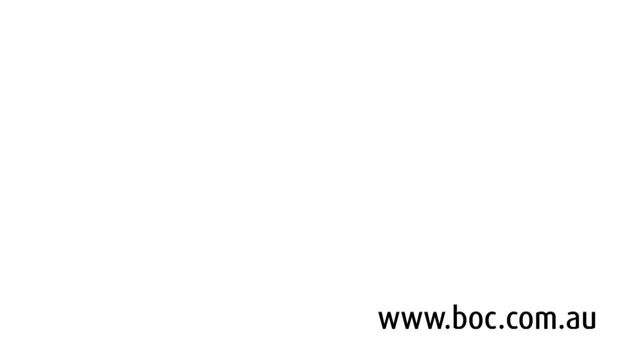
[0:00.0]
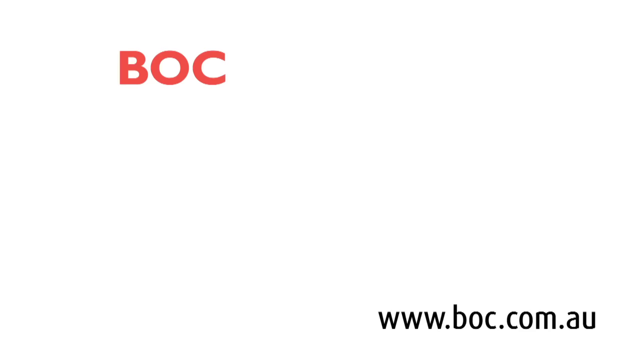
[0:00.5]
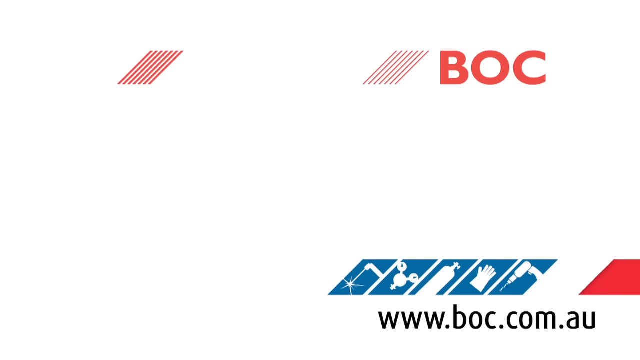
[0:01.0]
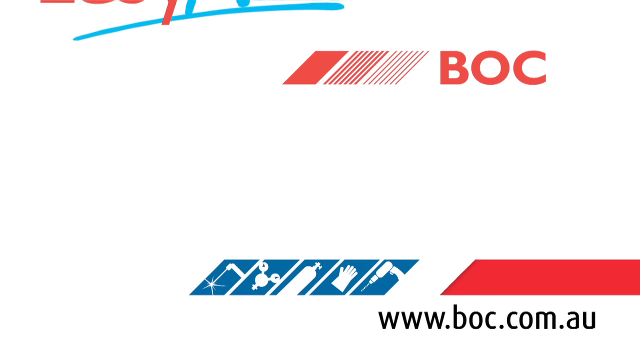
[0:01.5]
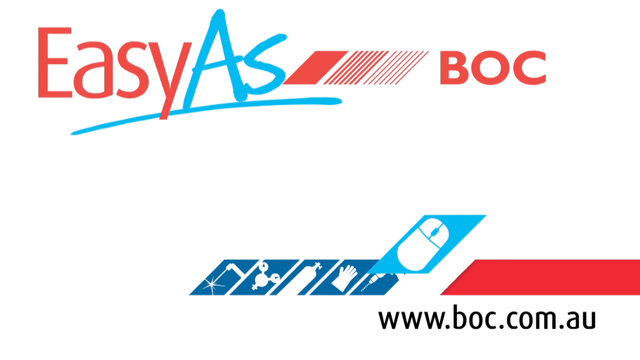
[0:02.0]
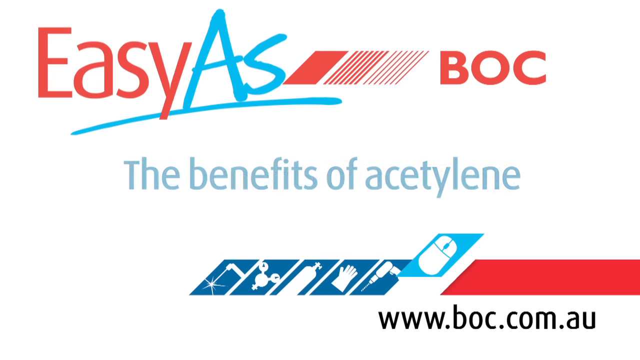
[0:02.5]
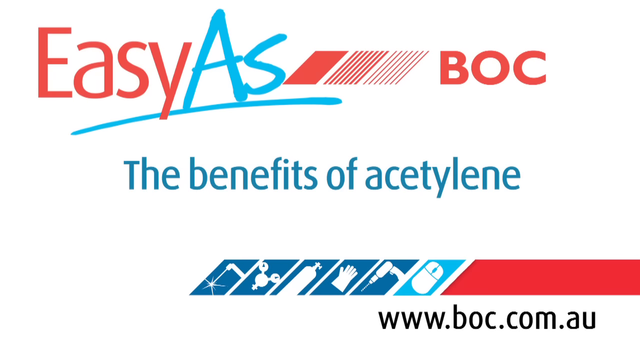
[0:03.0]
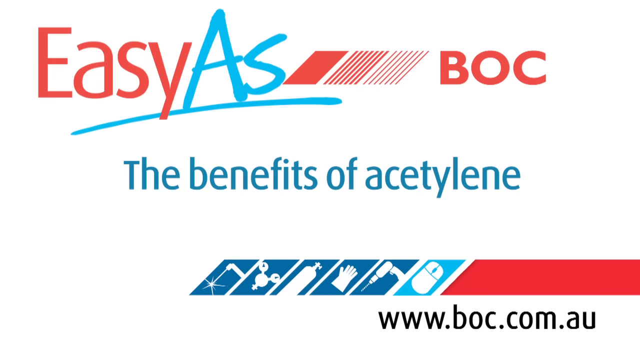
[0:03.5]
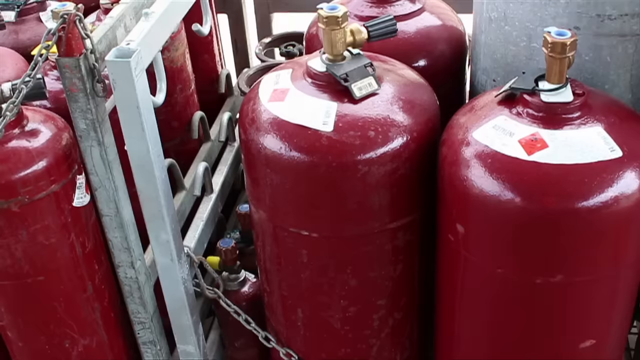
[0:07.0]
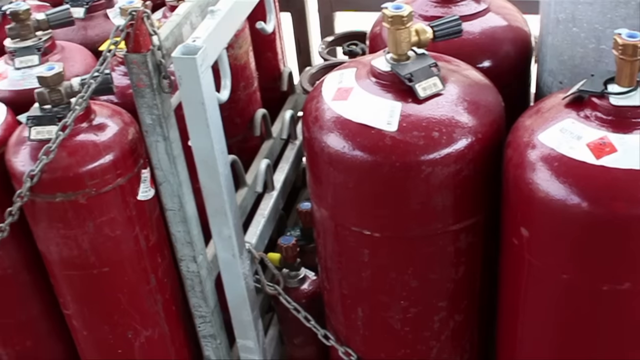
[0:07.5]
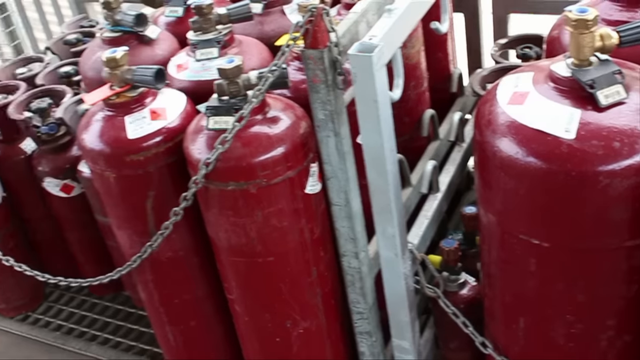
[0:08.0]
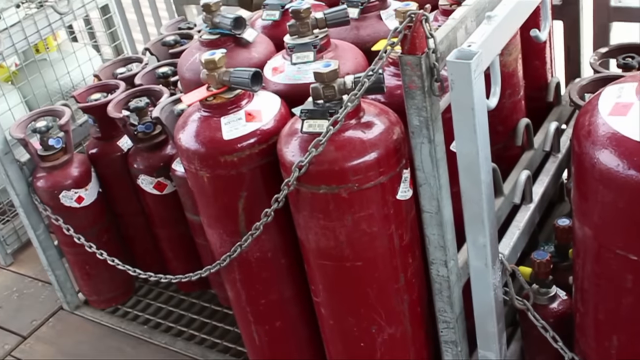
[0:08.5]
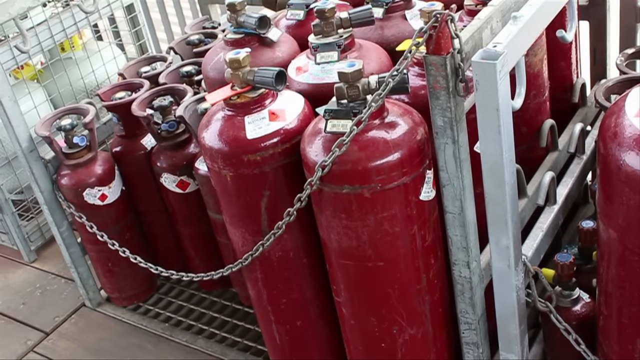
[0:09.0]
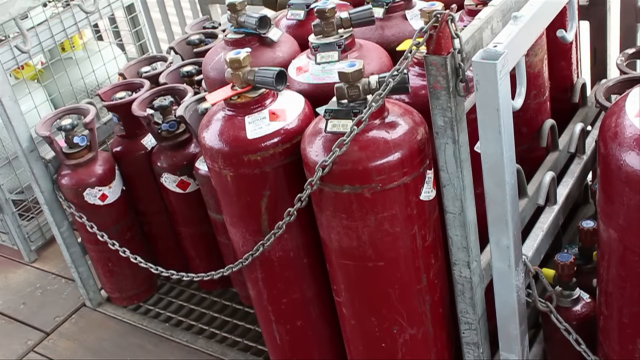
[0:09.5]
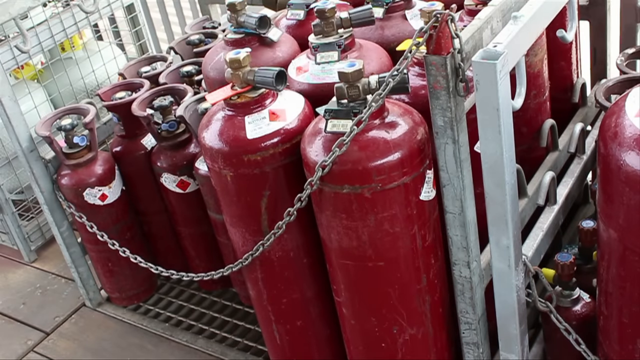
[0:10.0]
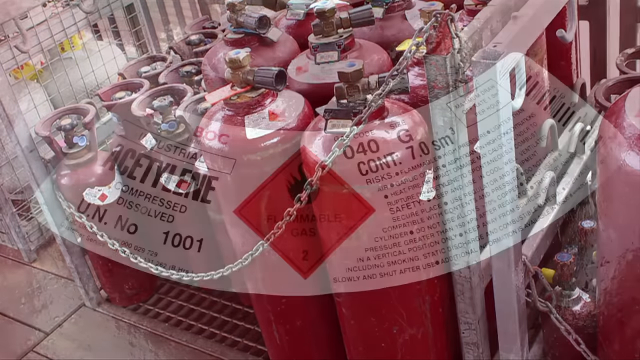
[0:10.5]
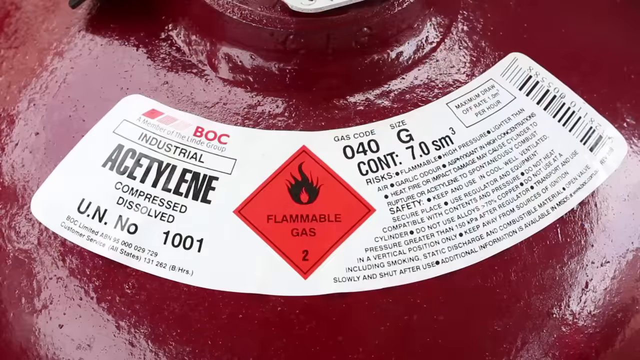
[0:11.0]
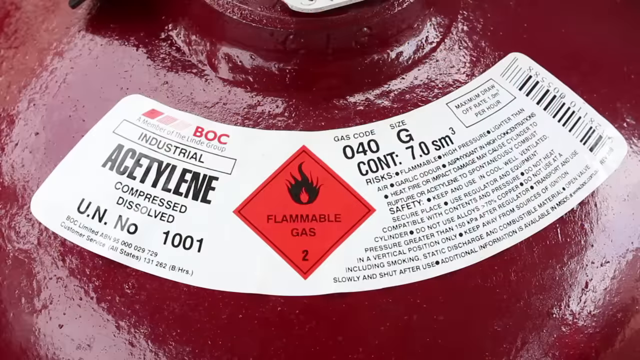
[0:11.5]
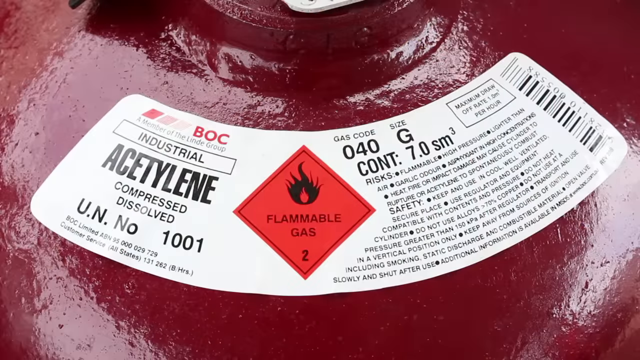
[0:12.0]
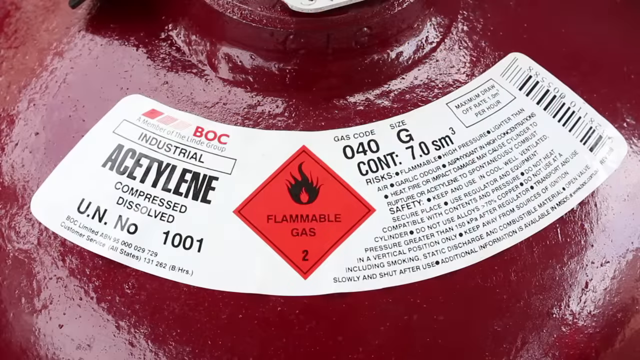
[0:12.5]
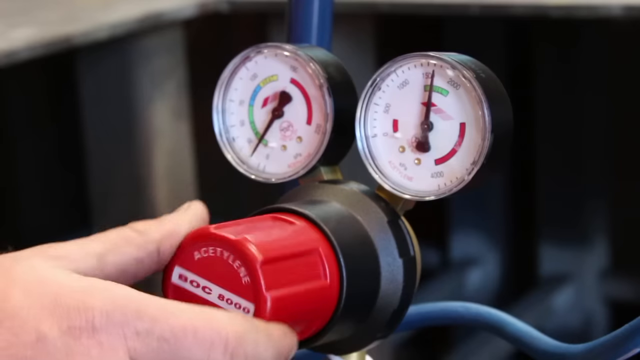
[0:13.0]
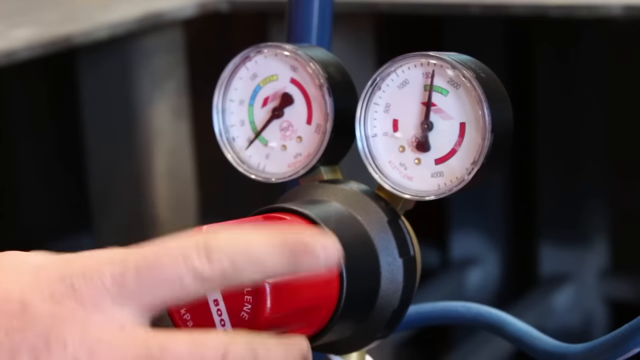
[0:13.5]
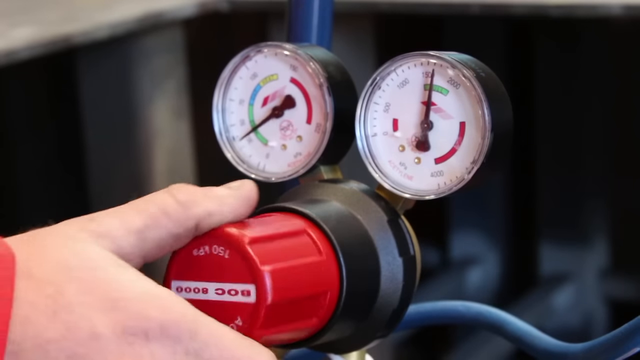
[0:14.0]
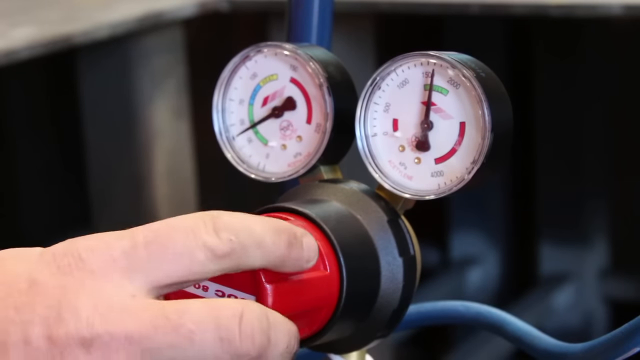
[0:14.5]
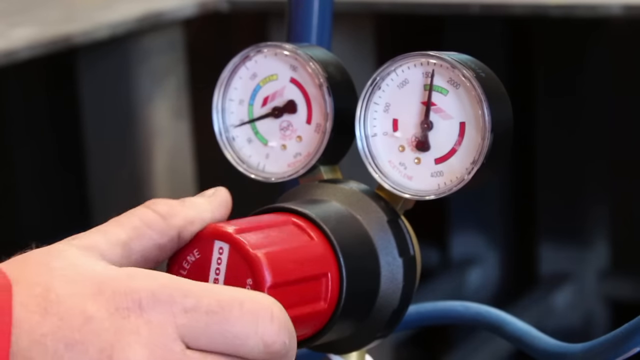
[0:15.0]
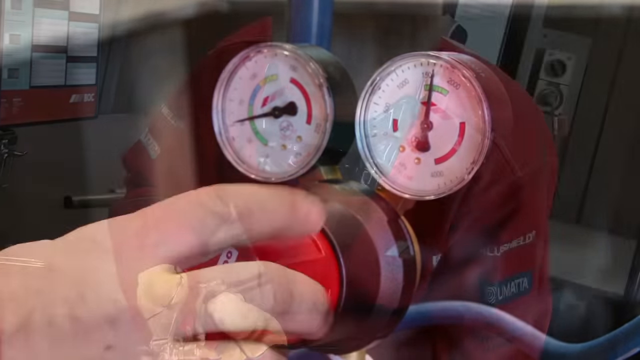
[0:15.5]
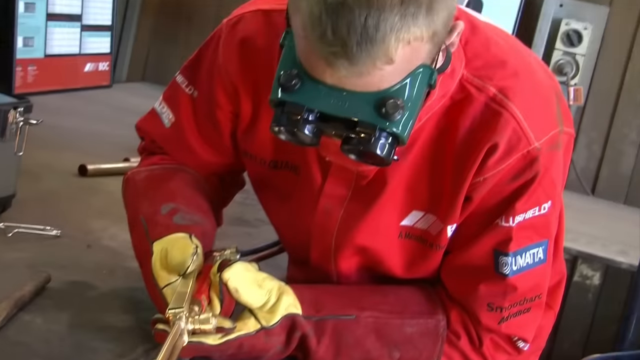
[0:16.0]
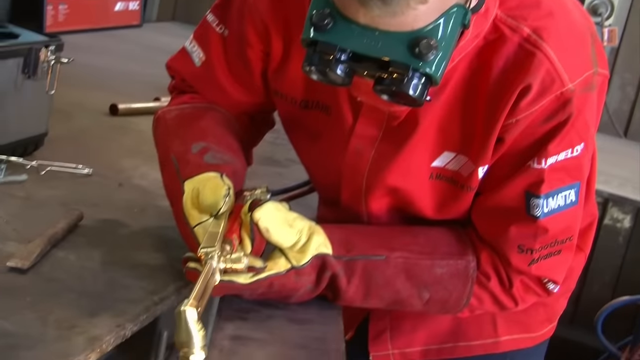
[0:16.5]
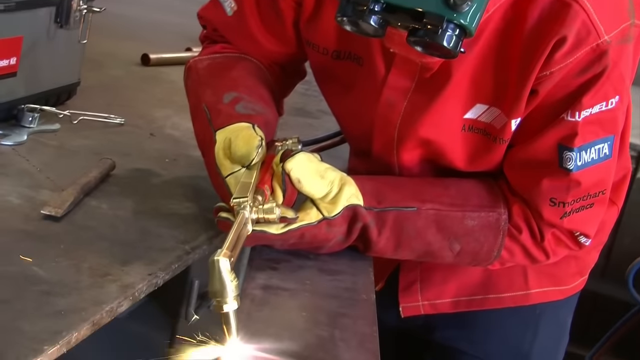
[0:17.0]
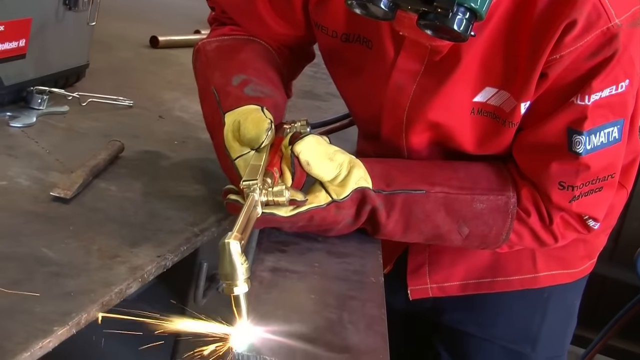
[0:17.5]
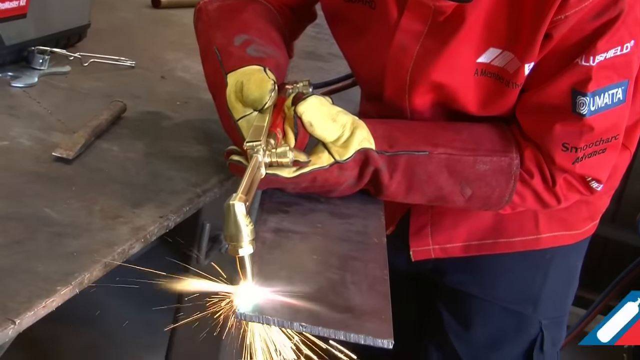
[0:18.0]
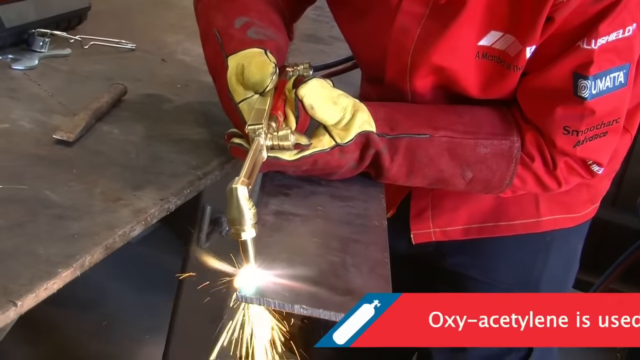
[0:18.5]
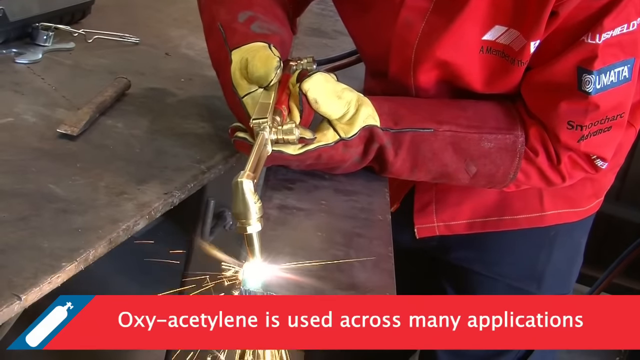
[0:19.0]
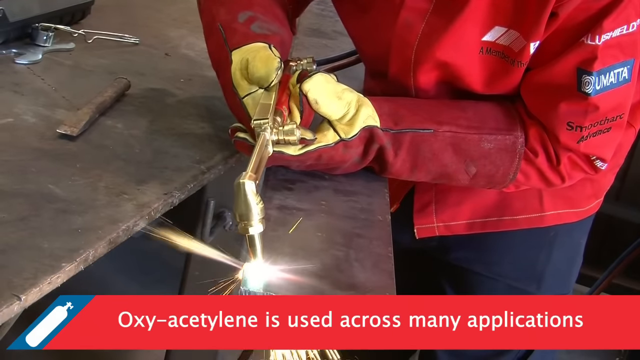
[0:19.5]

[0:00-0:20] The video opens on a logo that reads "easy as BOC," written in blue and red. Underneath it are the words "the benefits of acetylene." Below the writing is a banner containing six images: one looks like a canister, one looks like a glove, and the others are unclear. On the right-hand side is "www.boc.com.au." Next, a group of burgundy canisters is shown, held next to one another inside silver containers. Each has what looks like a white sticker on top, and a chain runs across the front of the group. On the far left there appears to be another group of canisters, possibly propane canisters. A close-up of the top of a container shows a flammable gas sticker identifying it as acetylene.